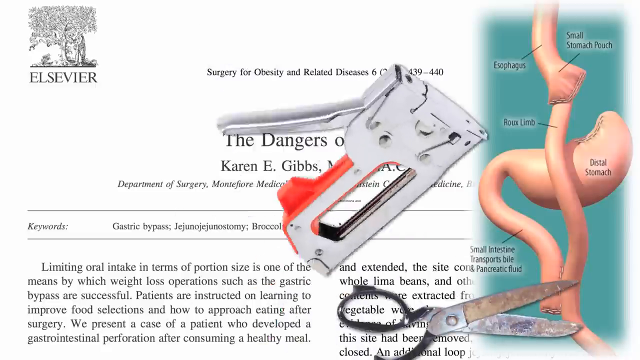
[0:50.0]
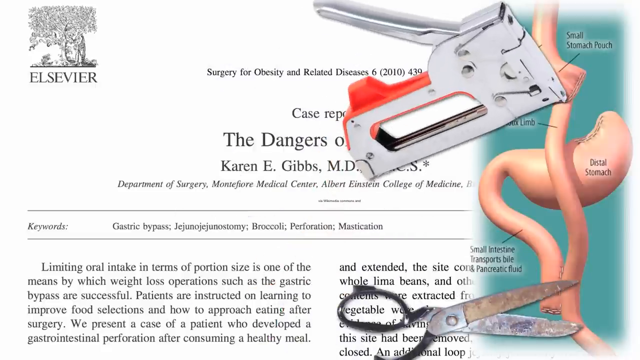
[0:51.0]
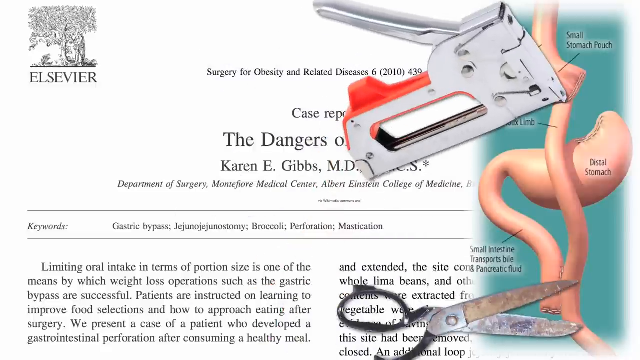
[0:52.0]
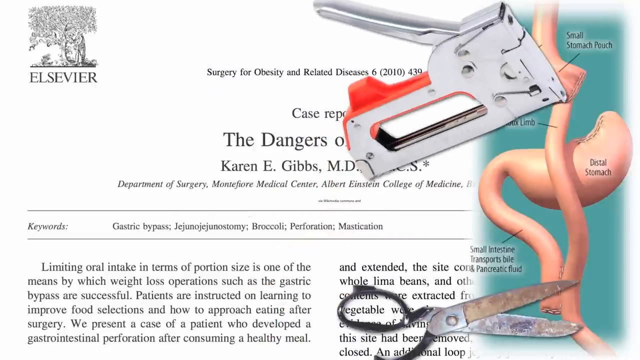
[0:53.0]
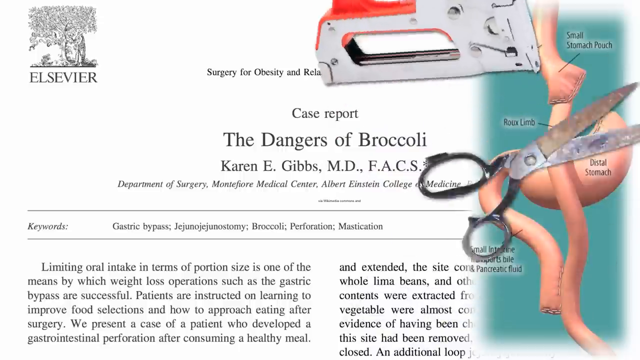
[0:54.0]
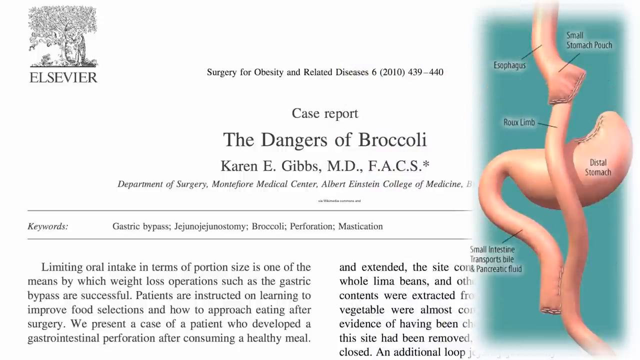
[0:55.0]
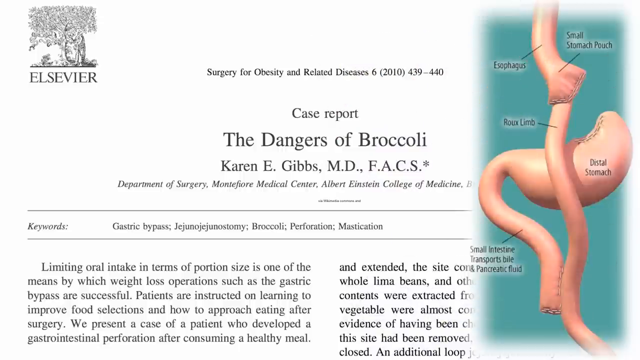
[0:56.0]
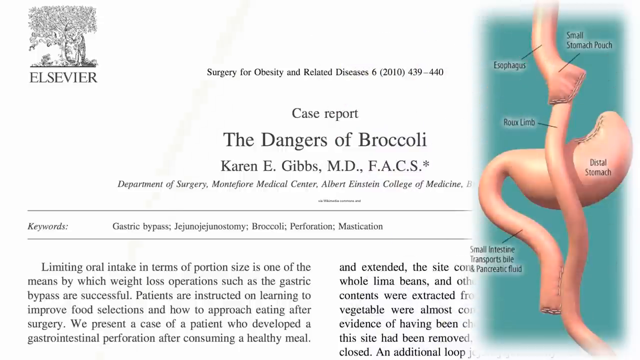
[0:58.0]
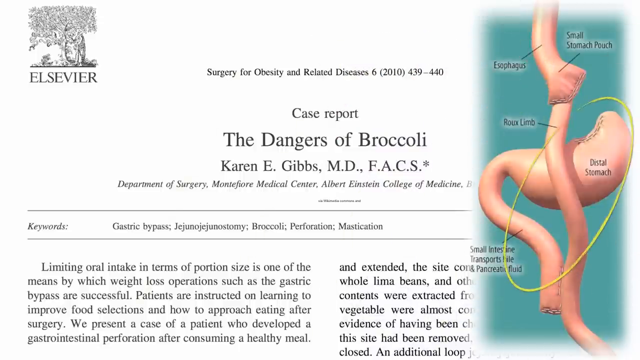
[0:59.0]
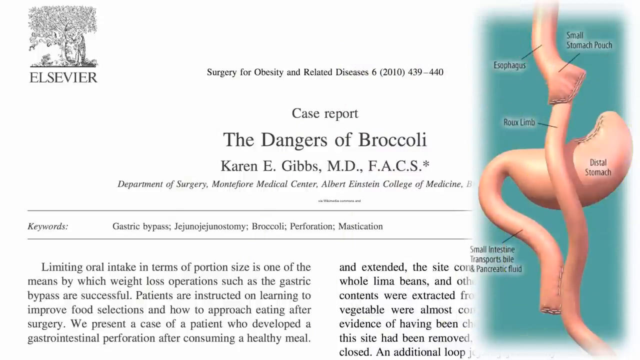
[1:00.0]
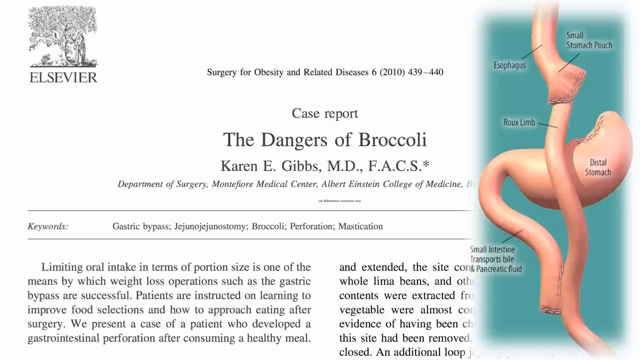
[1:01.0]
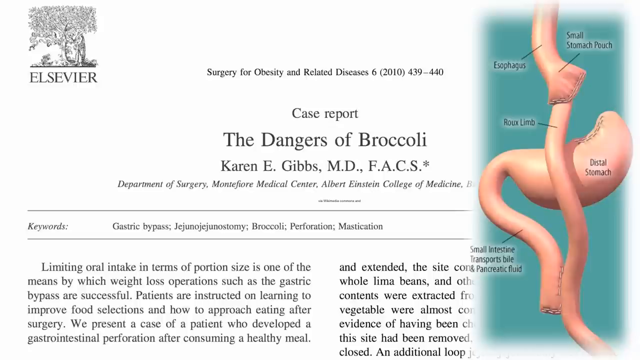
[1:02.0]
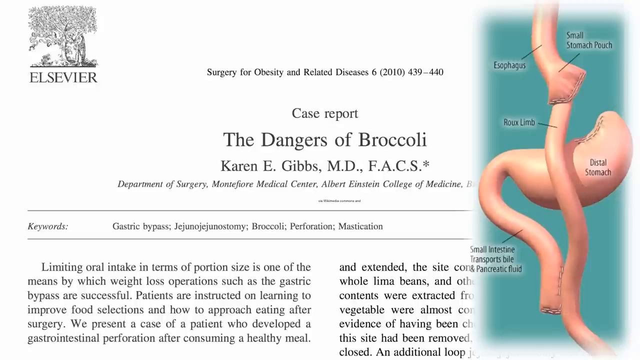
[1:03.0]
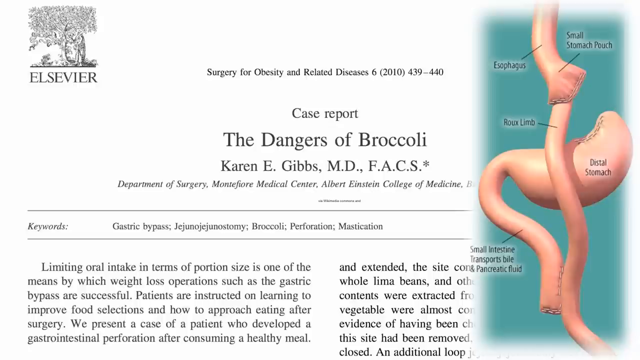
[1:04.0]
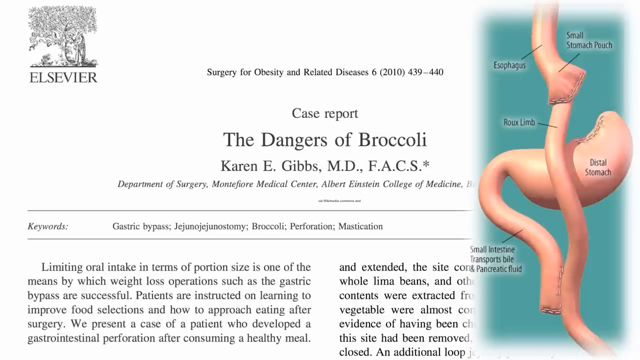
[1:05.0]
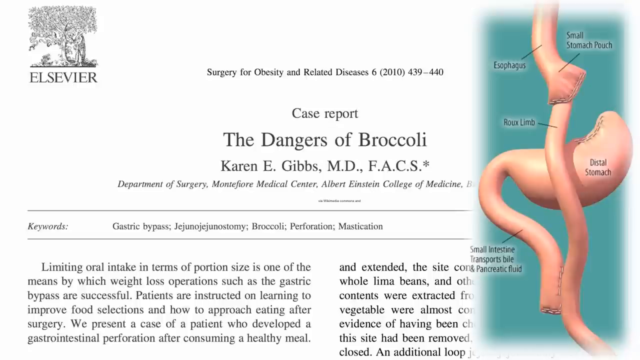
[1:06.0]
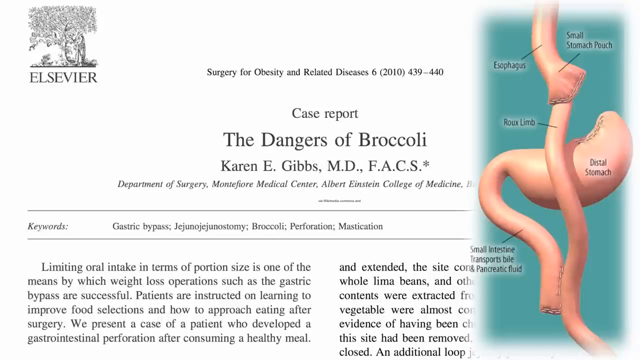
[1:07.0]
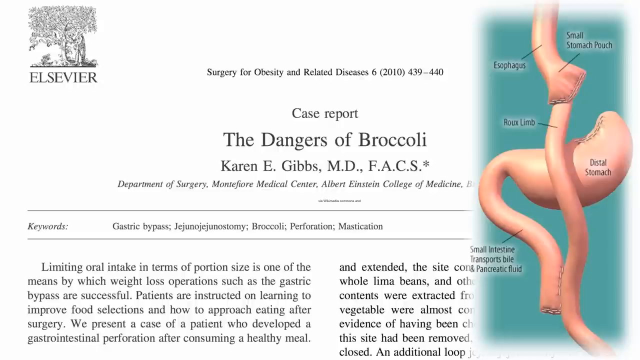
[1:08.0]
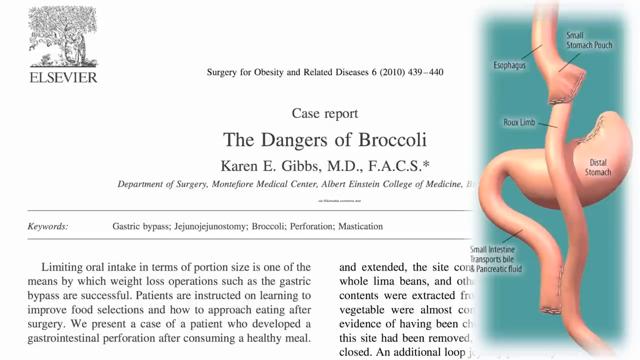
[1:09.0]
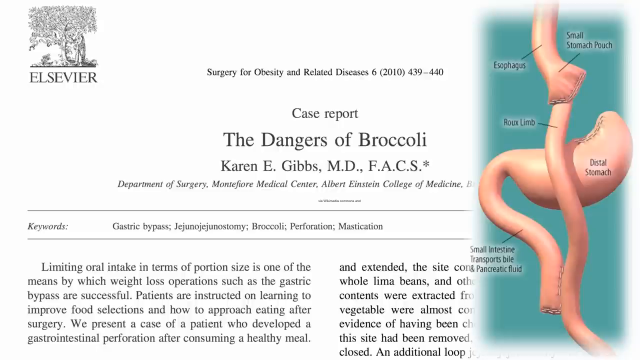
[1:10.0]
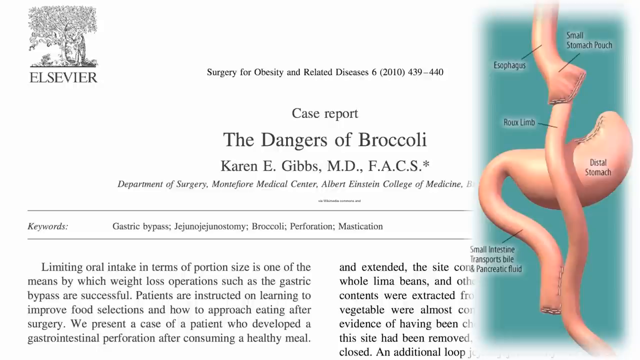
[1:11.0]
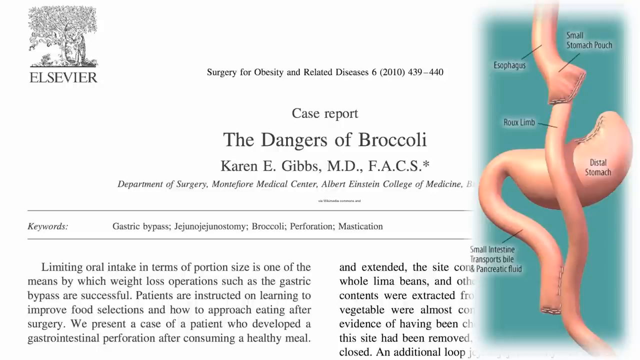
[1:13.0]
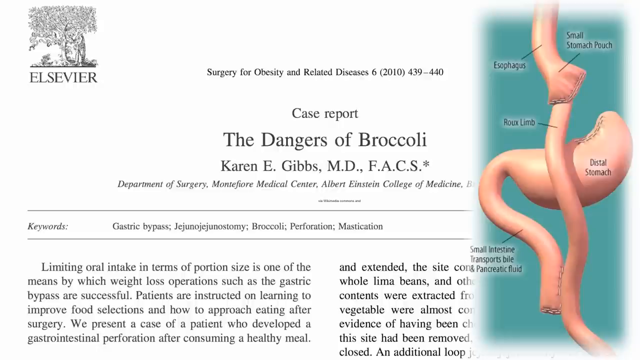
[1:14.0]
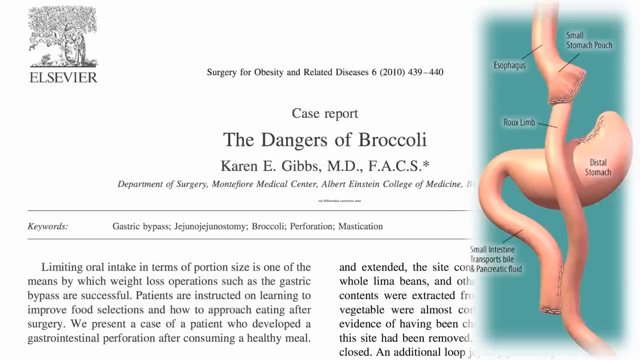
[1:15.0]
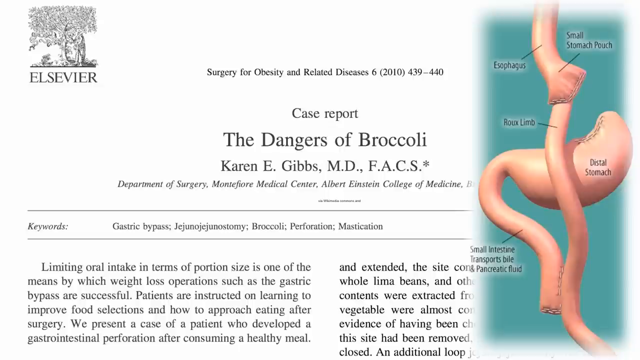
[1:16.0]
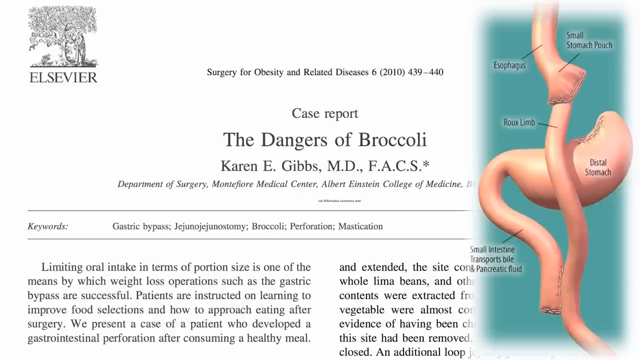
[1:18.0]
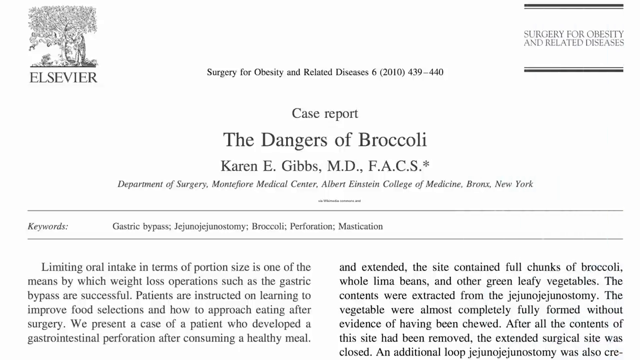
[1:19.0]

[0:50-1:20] On the same image of the stomach and esophagus, an animated pair of scissors swoops in from the bottom and seems to cut the bottom part of what looks like the small intestine tubing. At the top, what looks like a stapler, not a regular one but the kind used to staple wood for construction, appears to staple the top, esophagus part. The stapler is silver and the bottom of the scissors is somewhat rusty. The two tools come in and then disappear. A yellow circle then comes in and circles the stomach area of the diagram. The journal article remains visible in the center, with maybe a third of its right side covered by the diagram. The diagram then fades away, leaving the full article.